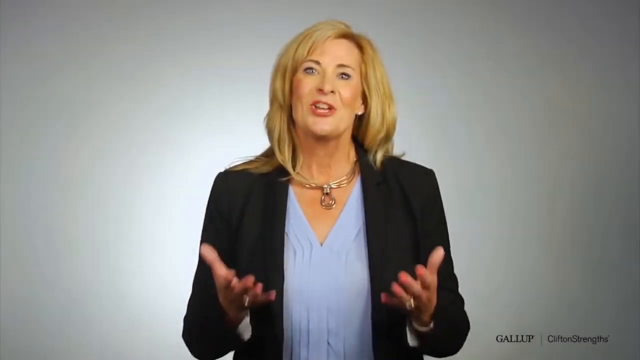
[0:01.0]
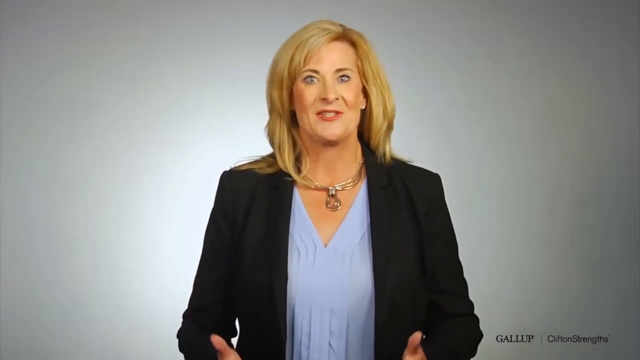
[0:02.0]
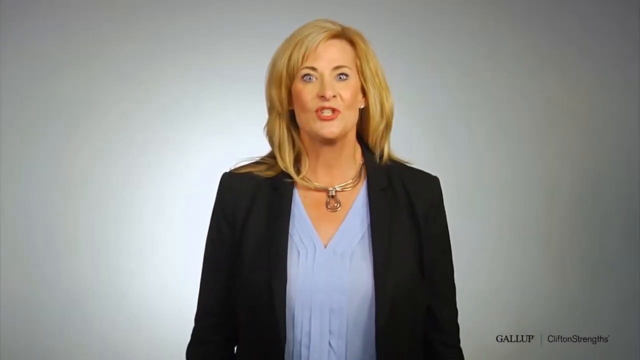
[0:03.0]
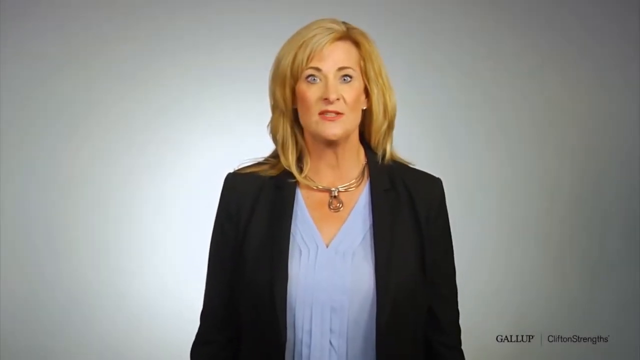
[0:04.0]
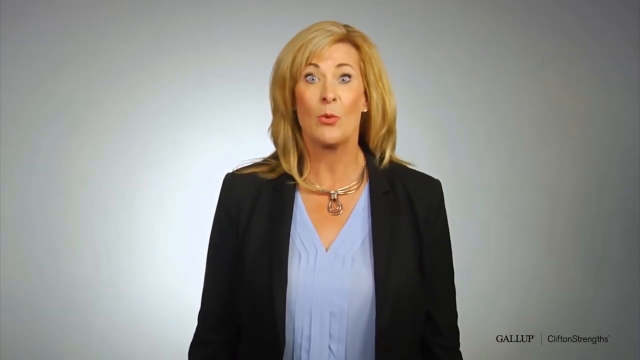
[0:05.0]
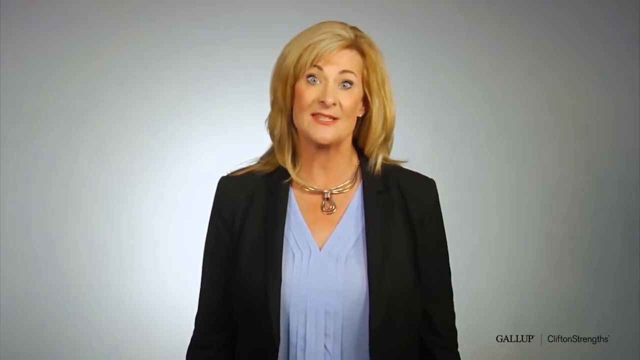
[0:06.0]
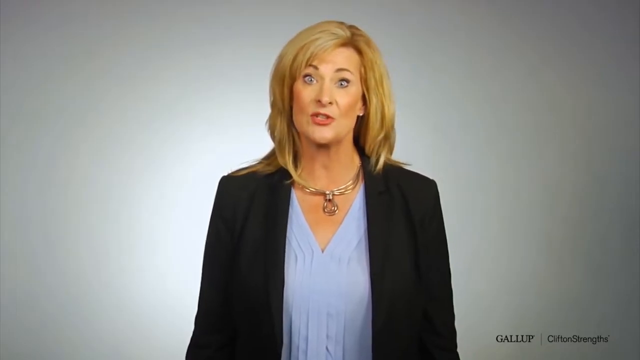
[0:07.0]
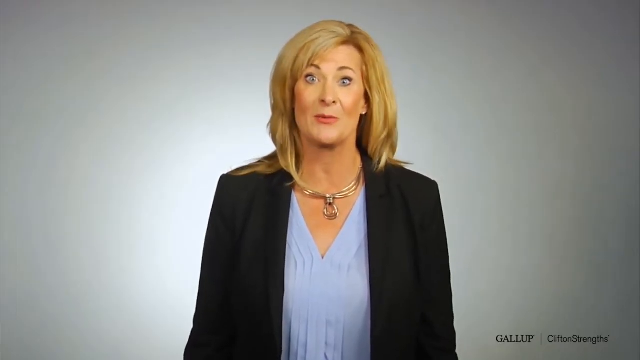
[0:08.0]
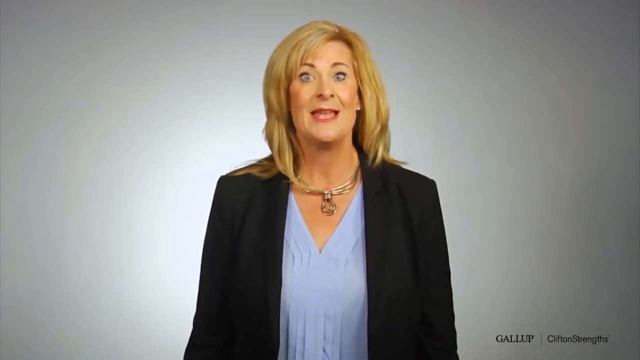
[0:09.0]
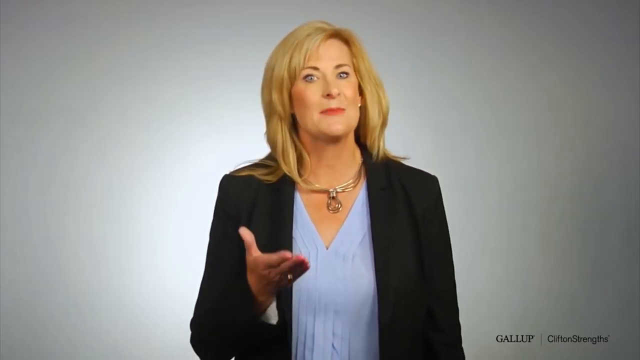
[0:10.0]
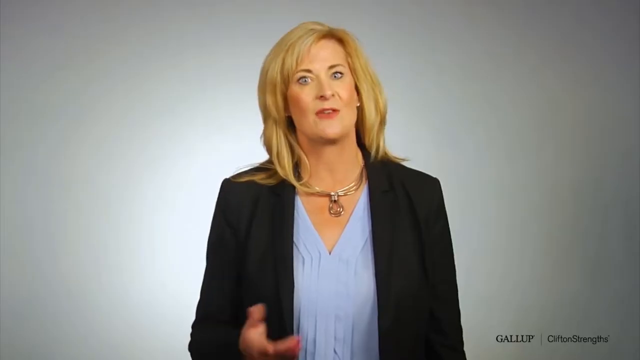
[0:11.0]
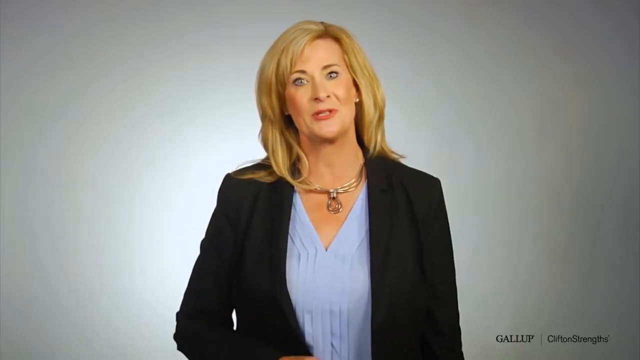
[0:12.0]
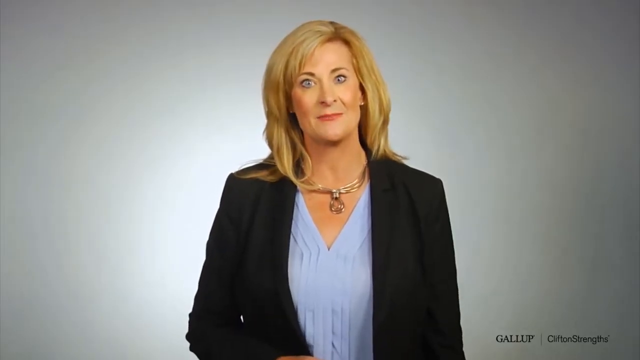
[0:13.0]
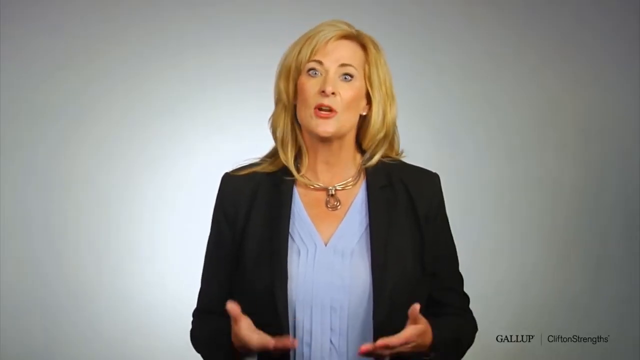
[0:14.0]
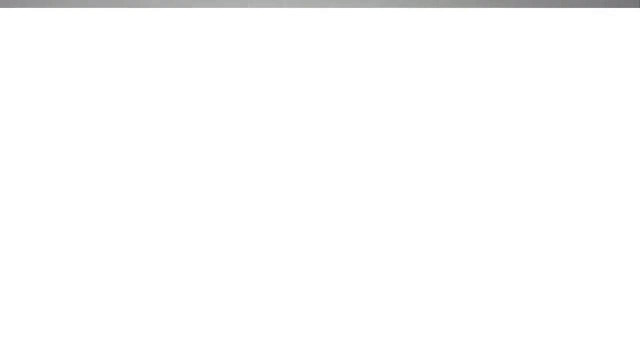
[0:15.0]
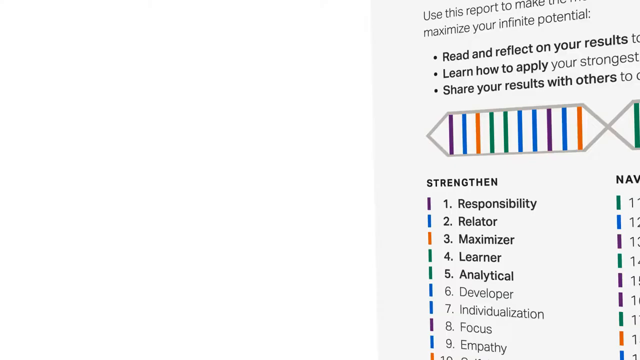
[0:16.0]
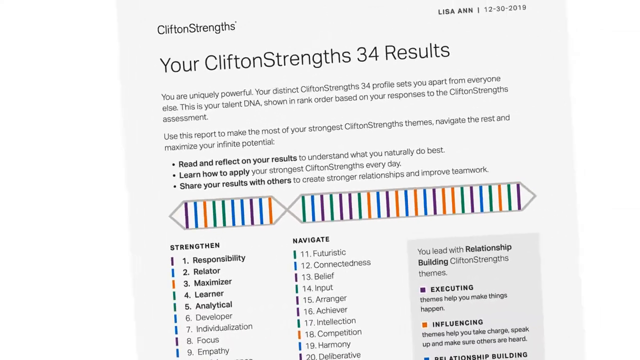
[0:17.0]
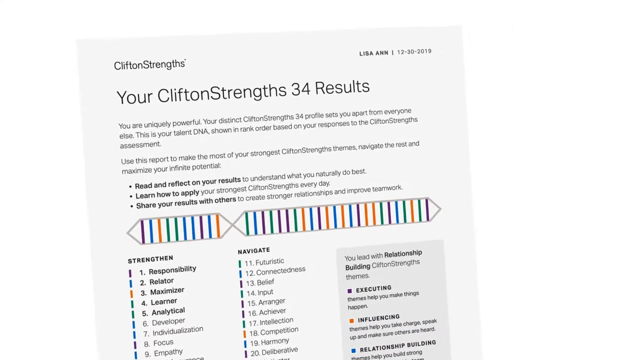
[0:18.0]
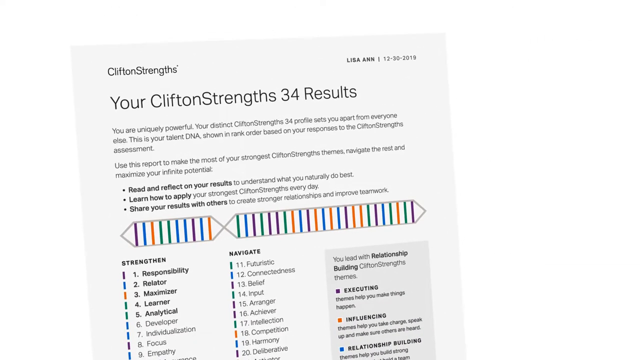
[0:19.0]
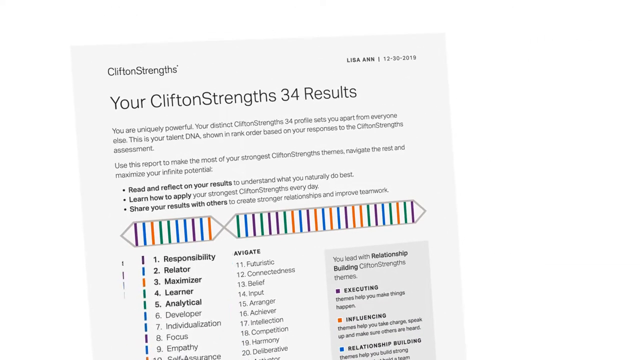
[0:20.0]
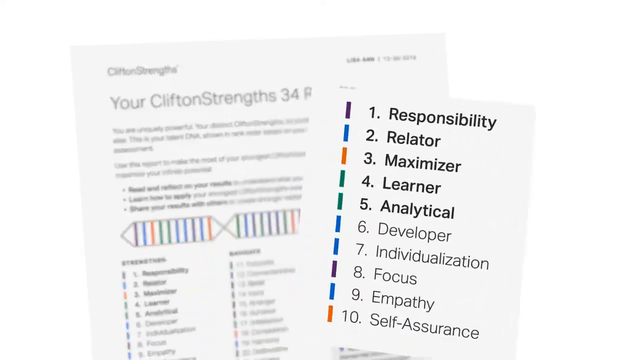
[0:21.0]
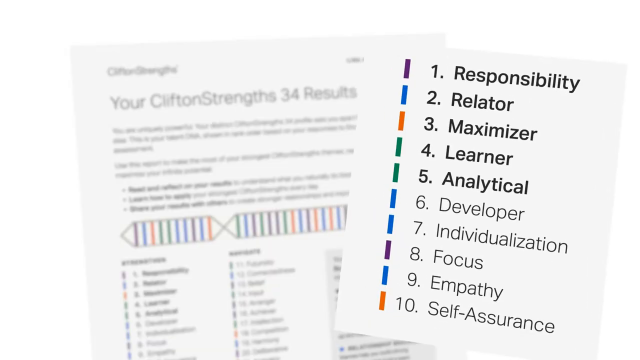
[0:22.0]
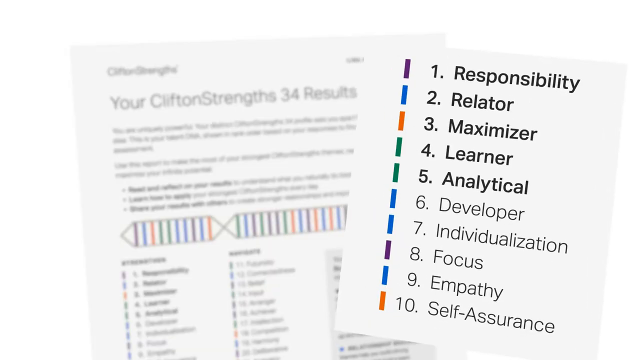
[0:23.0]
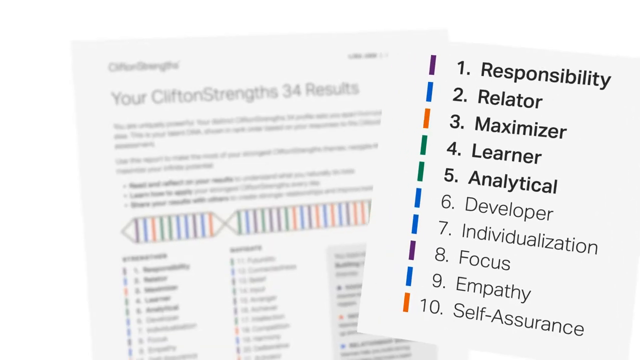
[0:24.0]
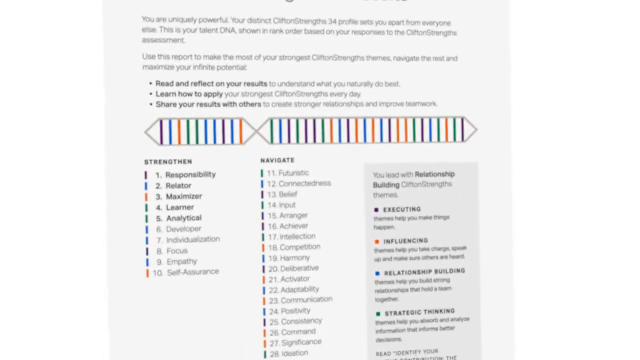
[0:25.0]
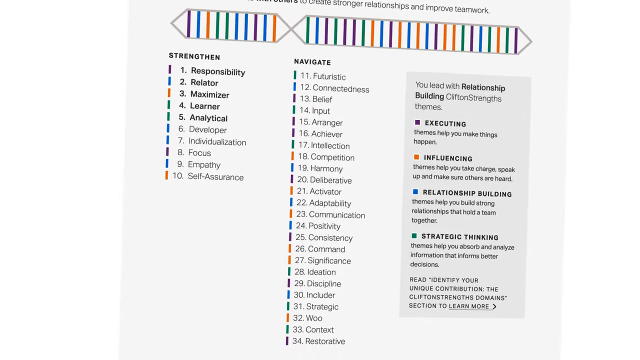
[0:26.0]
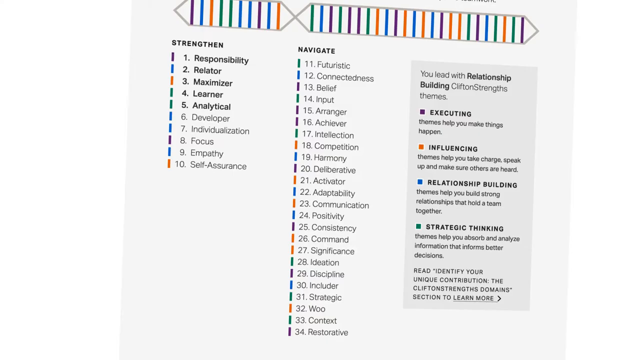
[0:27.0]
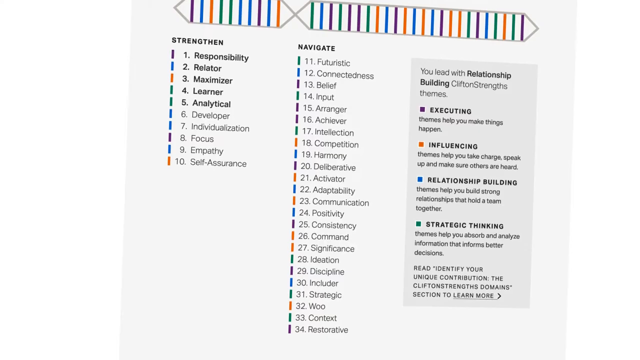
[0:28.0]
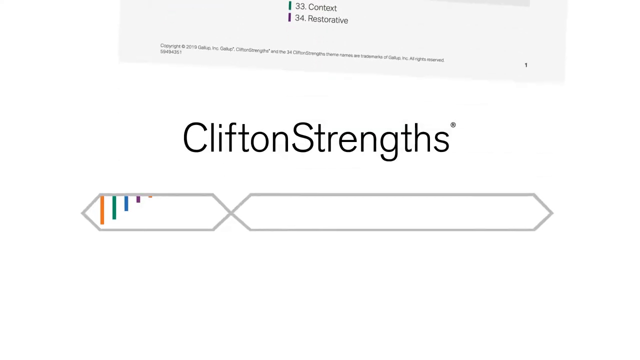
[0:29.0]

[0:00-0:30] A woman, centered and the full focus of the shot, stands in front of a gray screen and seems to be introducing herself and the video, or at least the concept it covers. The screen then cuts to a computer graphic of a sheet of paper that says "your CliftonStrengths 34 results" and "CliftonStrengths". It lists different types of traits people might have and where they rank on a sort of chart. The chart is organized in a way that almost looks like a strand of DNA, and each characteristic appears to have its own color, with the placement of those colors in the DNA-like strand probably indicating a personality.